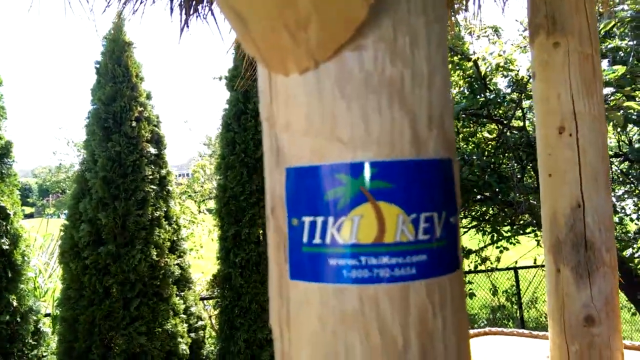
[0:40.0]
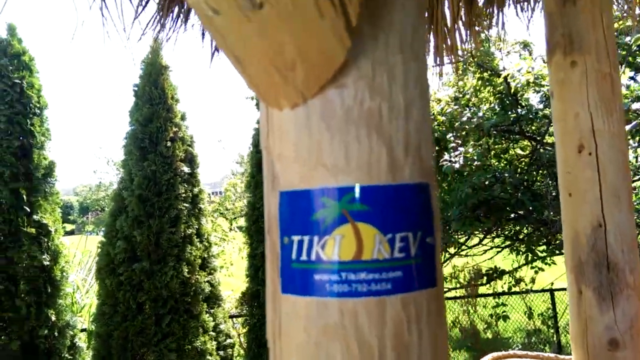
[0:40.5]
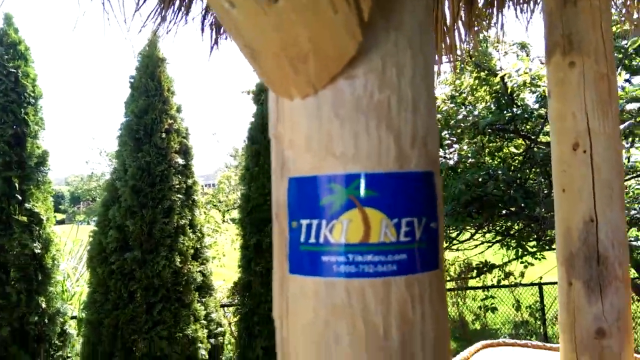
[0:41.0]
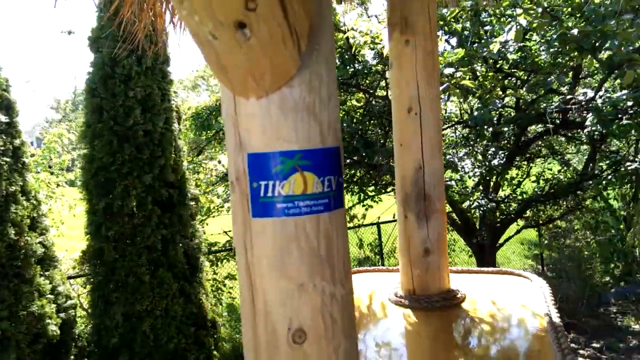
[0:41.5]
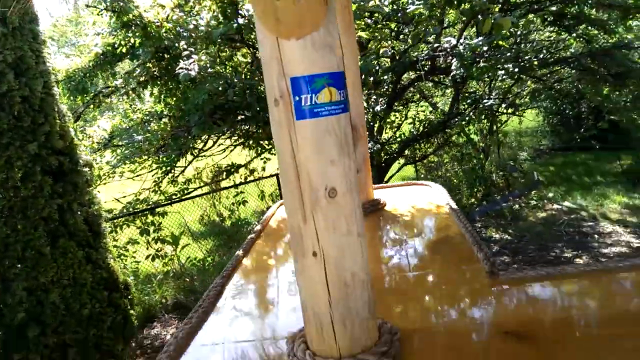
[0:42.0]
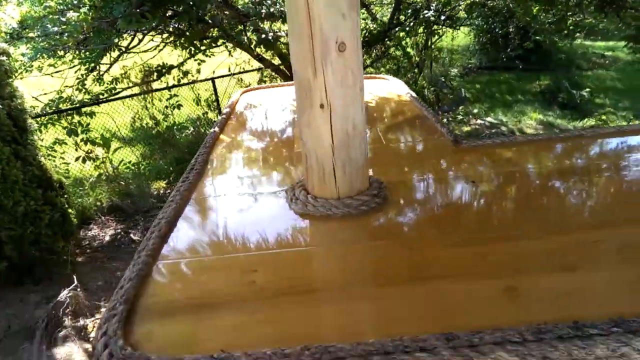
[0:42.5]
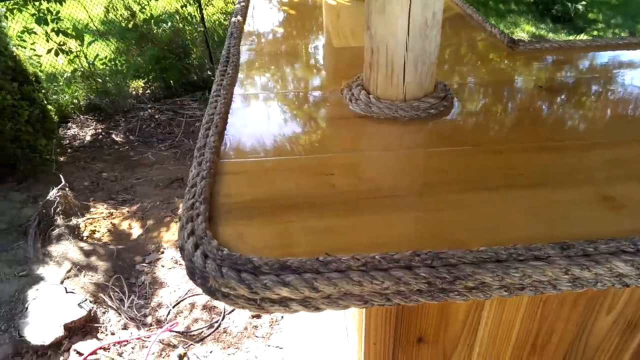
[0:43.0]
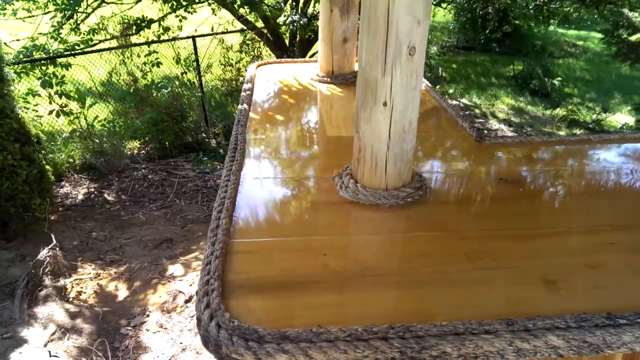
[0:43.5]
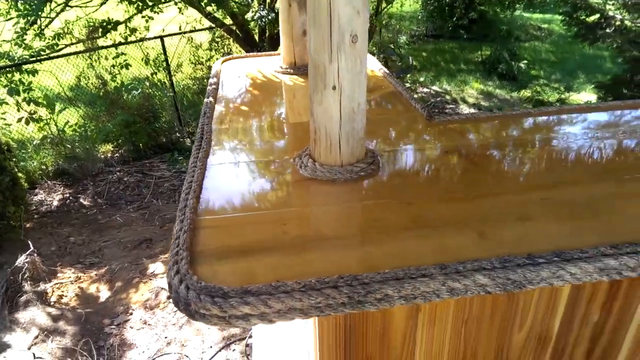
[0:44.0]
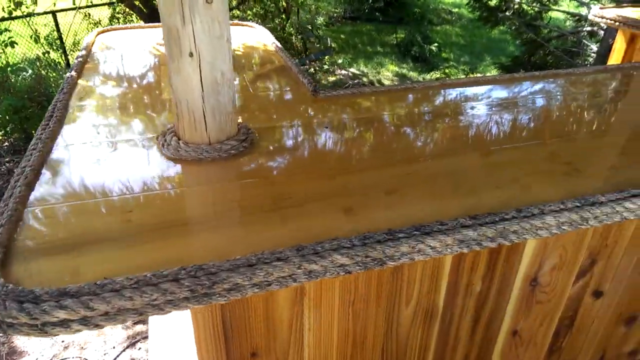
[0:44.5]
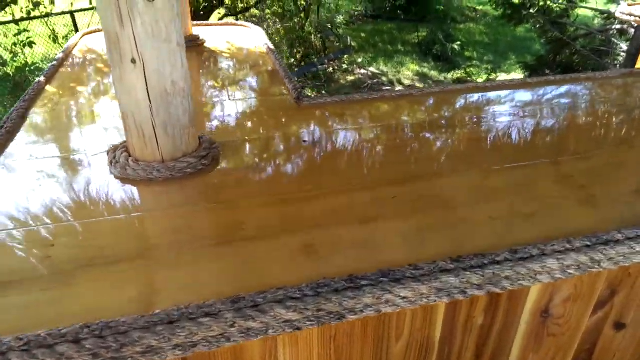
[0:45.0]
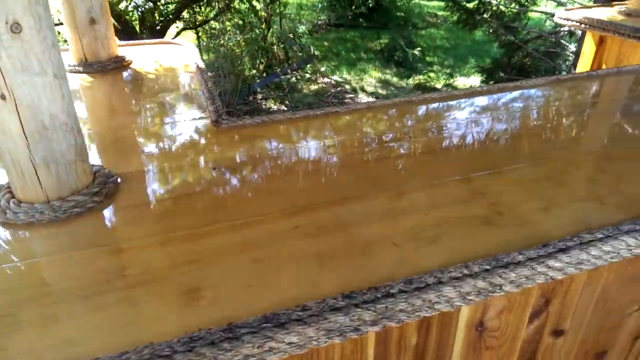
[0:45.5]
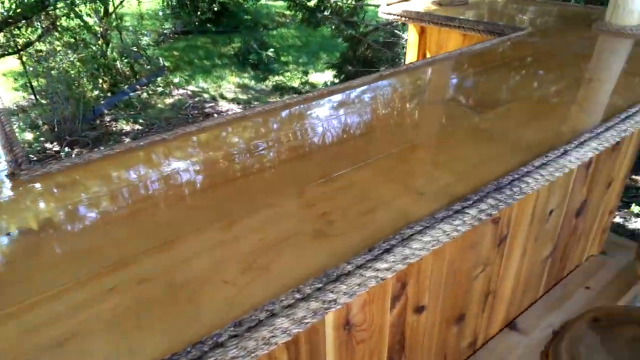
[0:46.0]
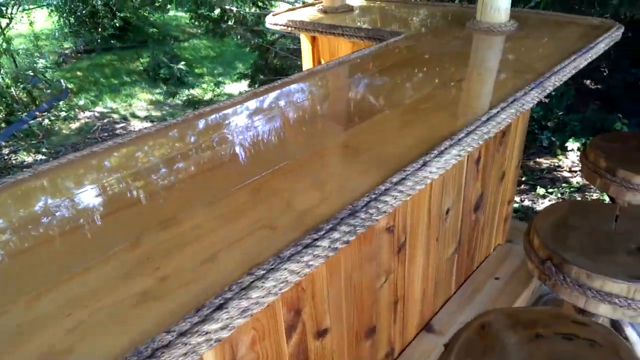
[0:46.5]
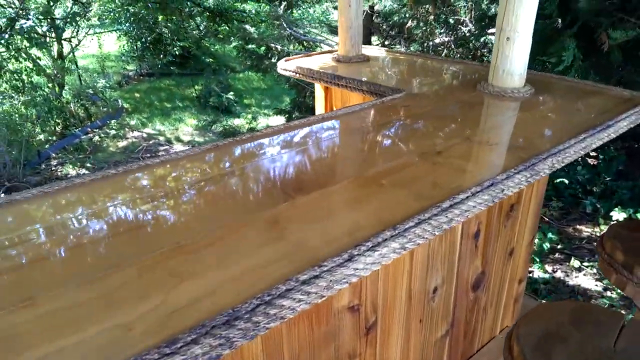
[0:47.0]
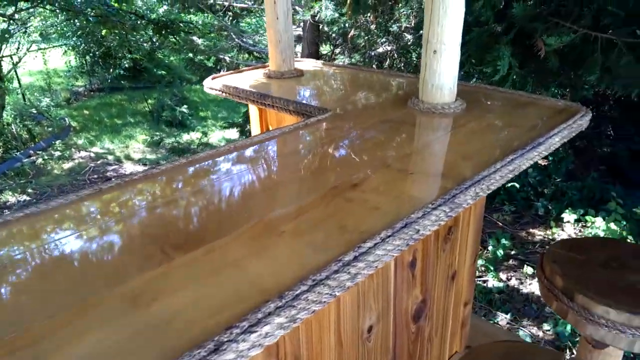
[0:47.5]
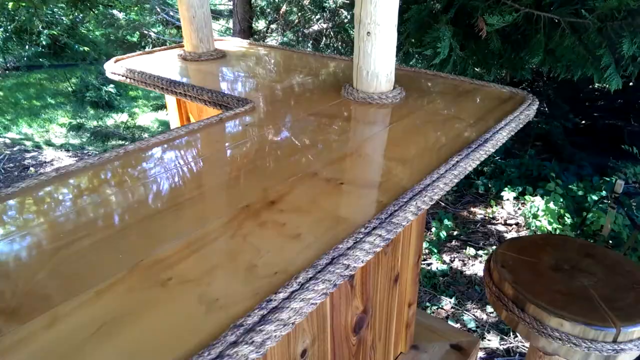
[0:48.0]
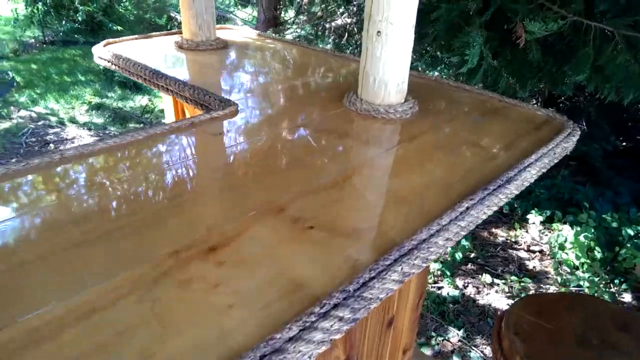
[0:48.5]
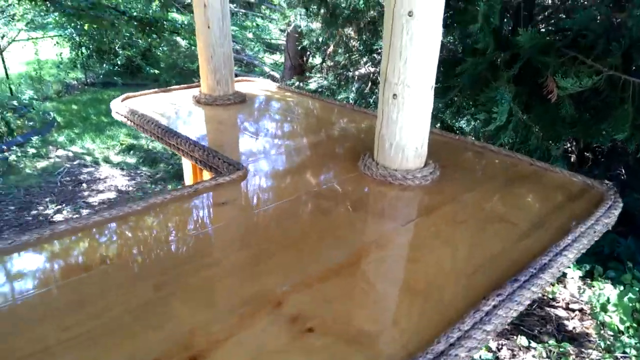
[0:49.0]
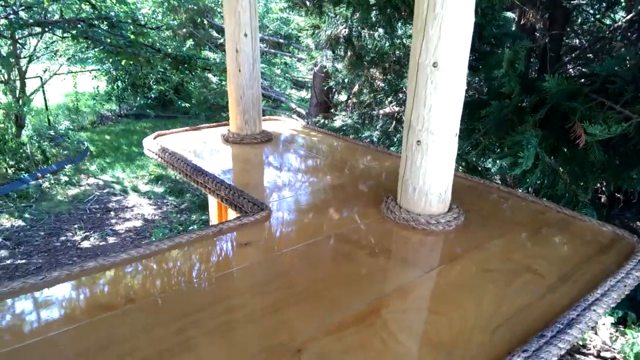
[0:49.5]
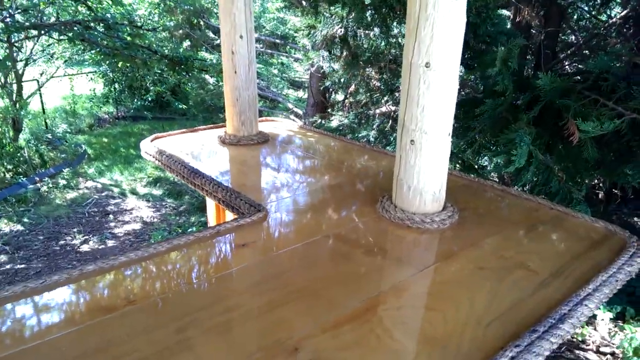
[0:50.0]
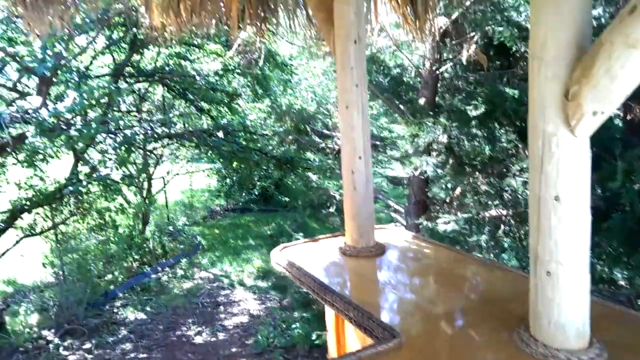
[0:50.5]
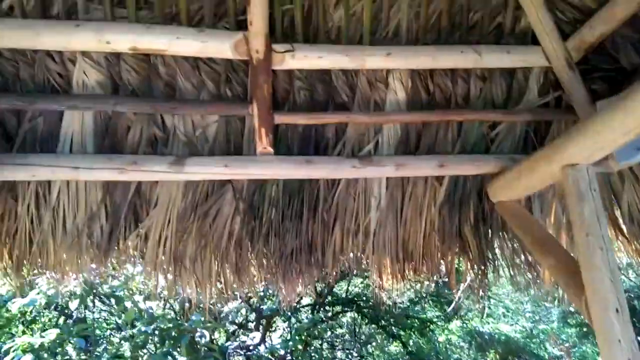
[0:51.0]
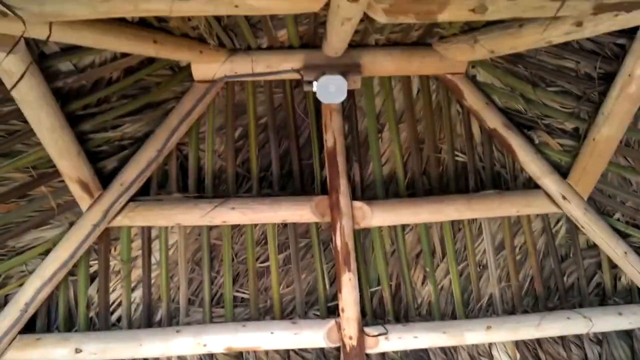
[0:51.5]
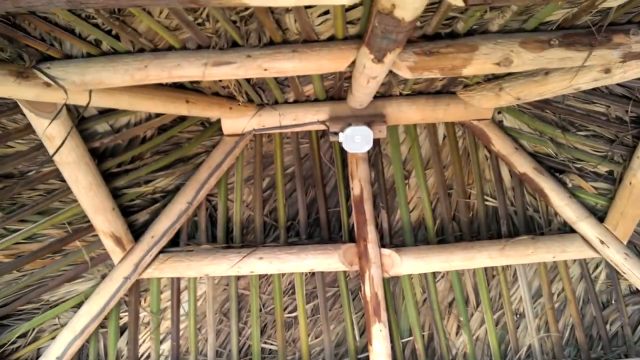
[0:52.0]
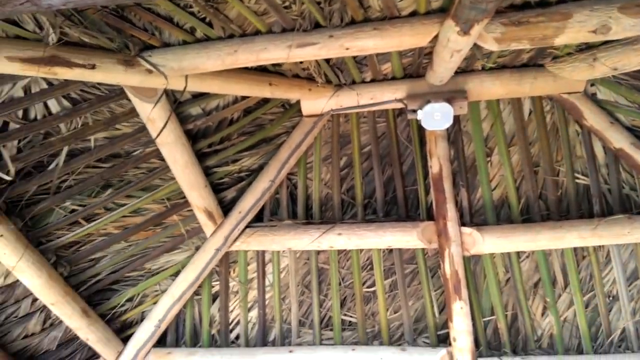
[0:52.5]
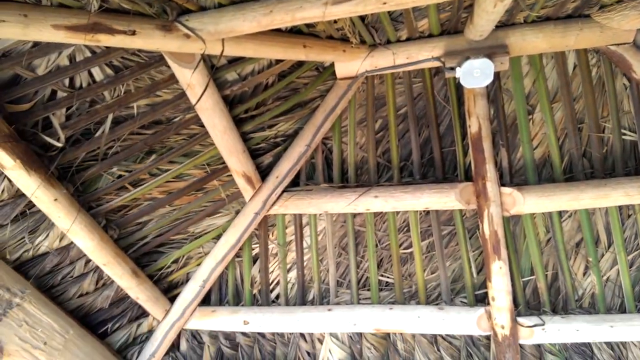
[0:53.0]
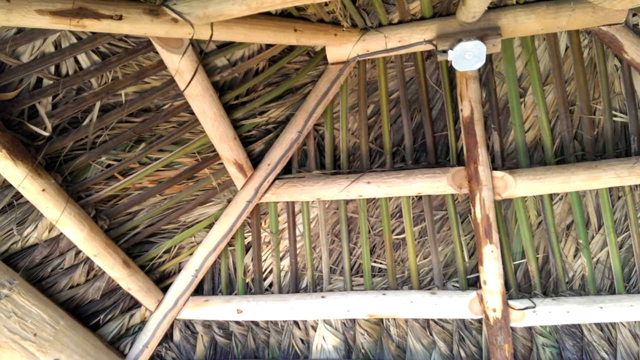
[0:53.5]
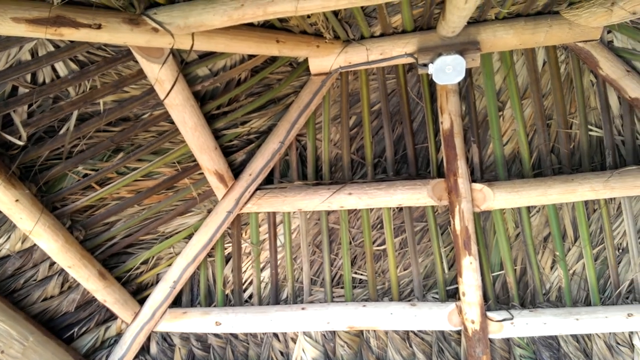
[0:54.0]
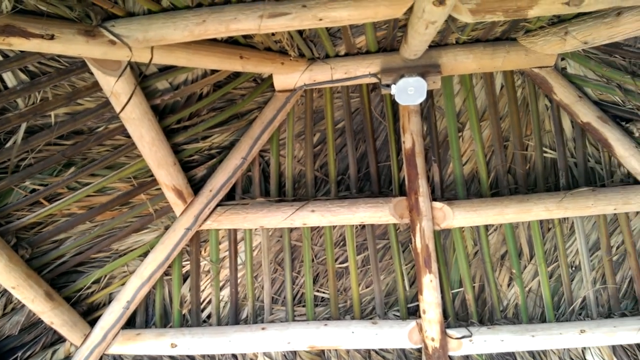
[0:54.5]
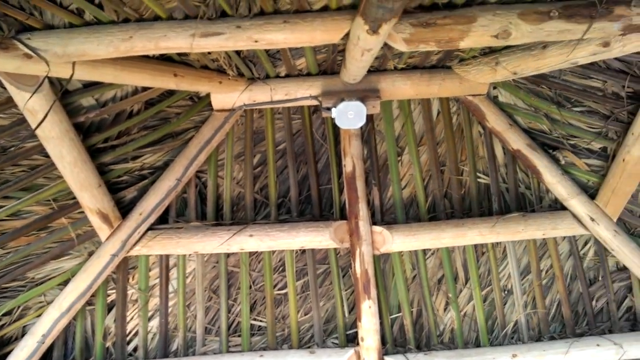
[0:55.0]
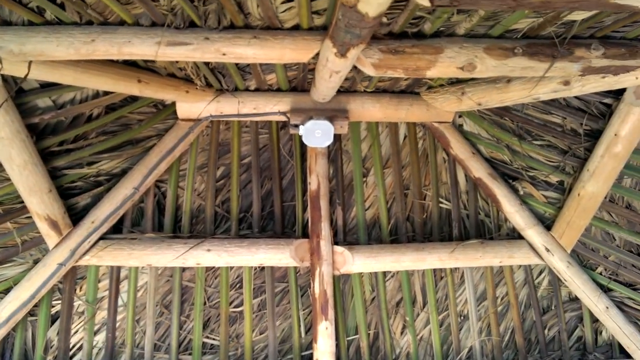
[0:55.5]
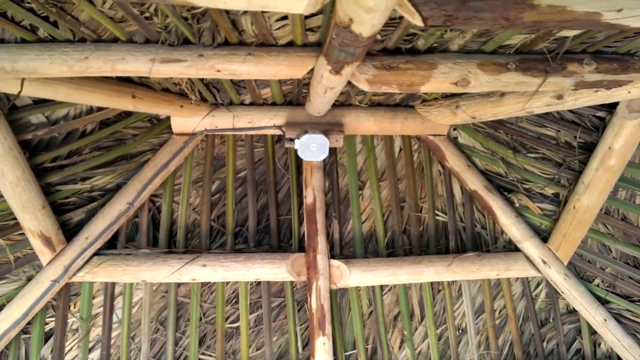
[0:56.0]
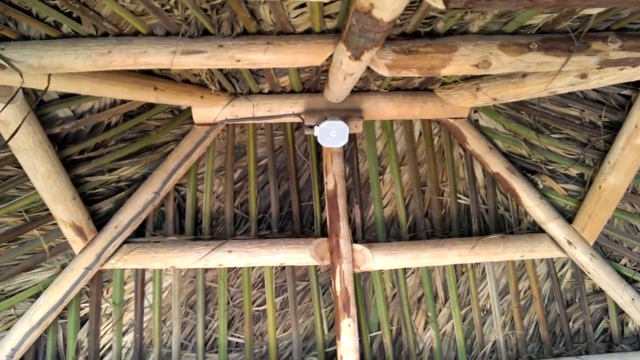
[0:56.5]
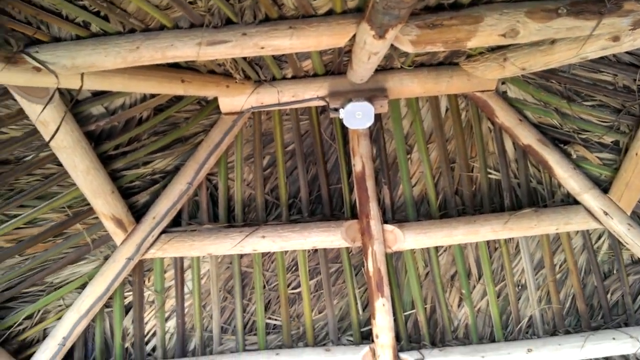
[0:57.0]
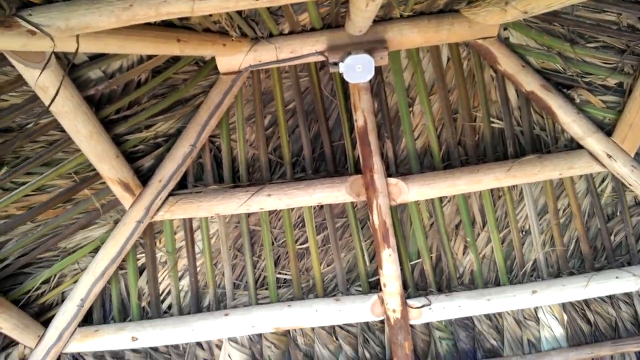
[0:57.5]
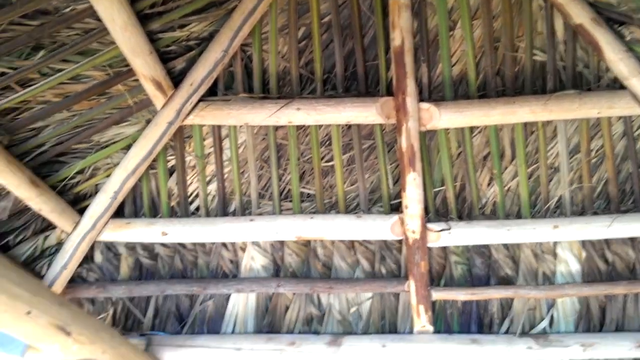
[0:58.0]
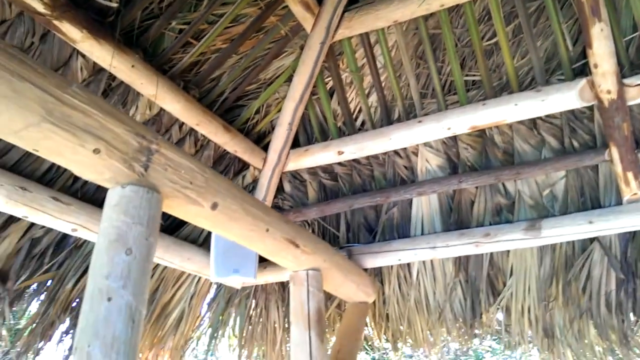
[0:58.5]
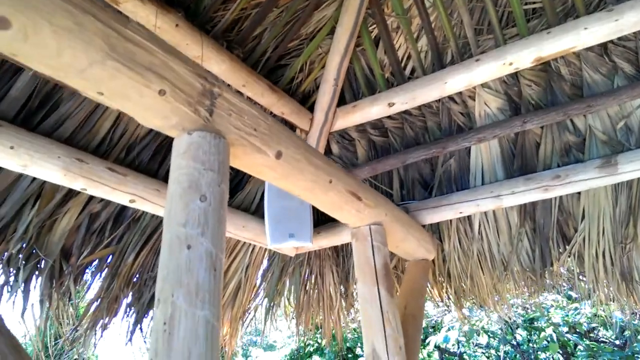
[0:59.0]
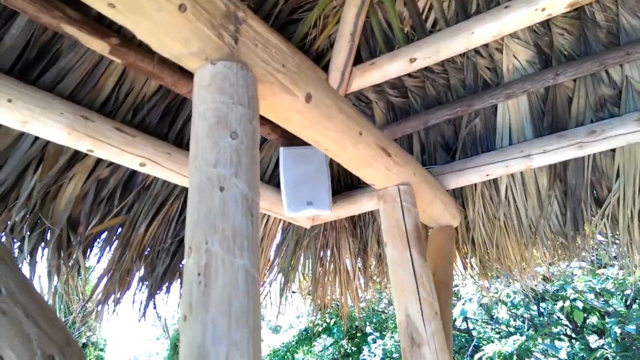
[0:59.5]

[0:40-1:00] A close-up shows a wooden beam in a pale pinewood shade with a blue sticker on it. The sticker has an image of half of a rising sun and a palm tree with a curved trunk, and across it in white text are the words "Tiki Kev". After lingering on this for a while, the camera pans backward to show the shiny countertop of the outdoor bar to which the beam is attached. What looks like braided fiber trims the perimeter of the countertop. The camera pans to the right, showing more of the shiny countertop, which reflects the leaves. It is a bright day that appears to be sunny, with lots of trees, vegetation and bushes in the background. The view then moves to the inside of the thatched roof, showing the bamboo structure used to construct it. The camera focuses on the bamboo structure, which is built in a sort of spider-web-like construction.